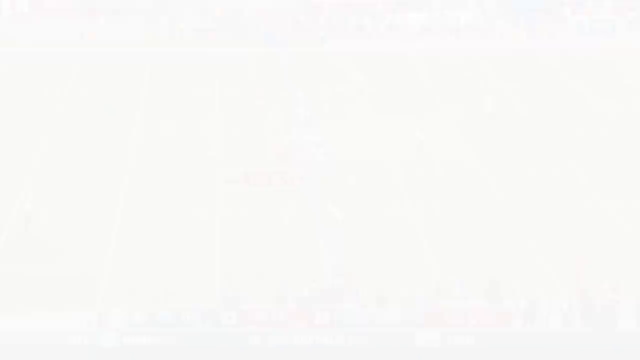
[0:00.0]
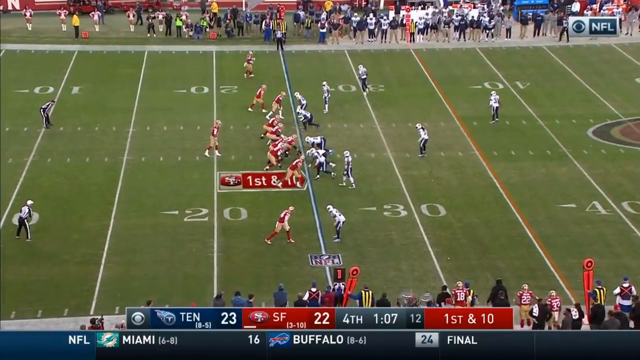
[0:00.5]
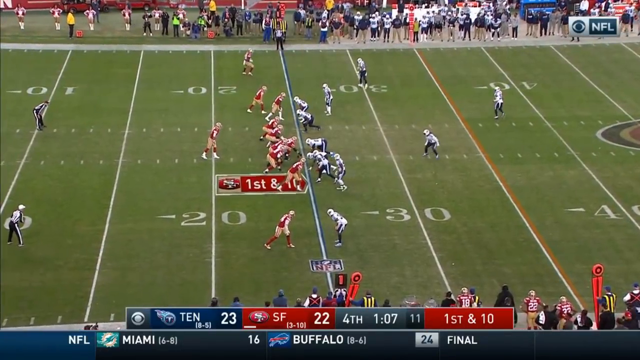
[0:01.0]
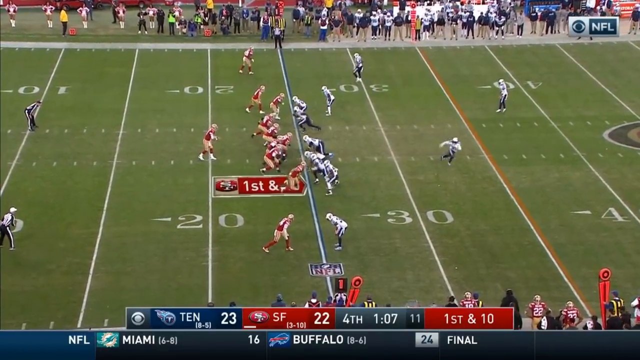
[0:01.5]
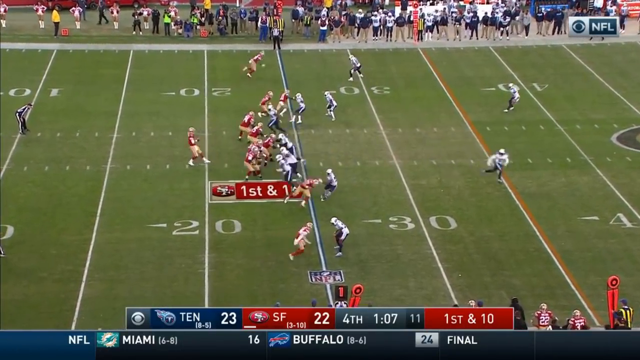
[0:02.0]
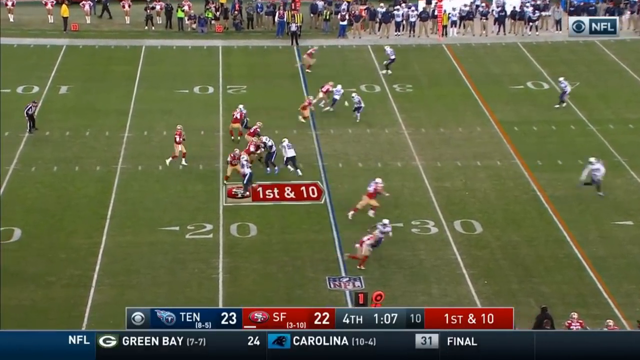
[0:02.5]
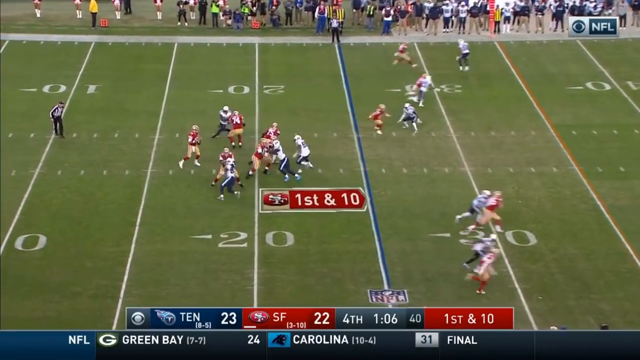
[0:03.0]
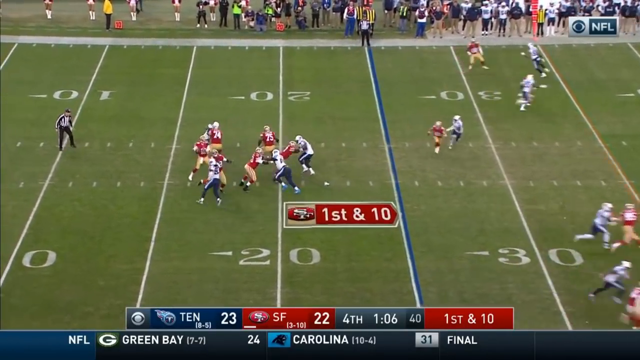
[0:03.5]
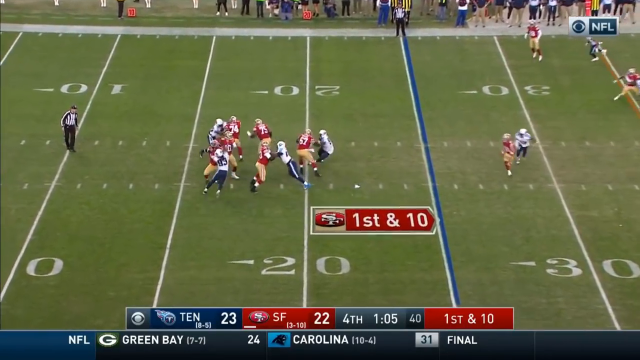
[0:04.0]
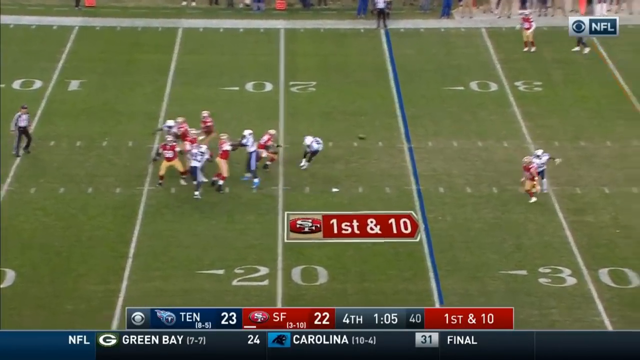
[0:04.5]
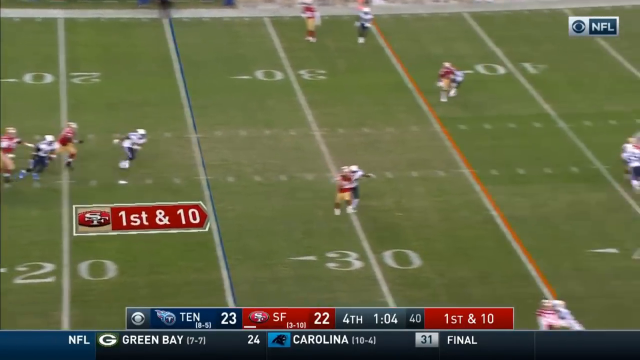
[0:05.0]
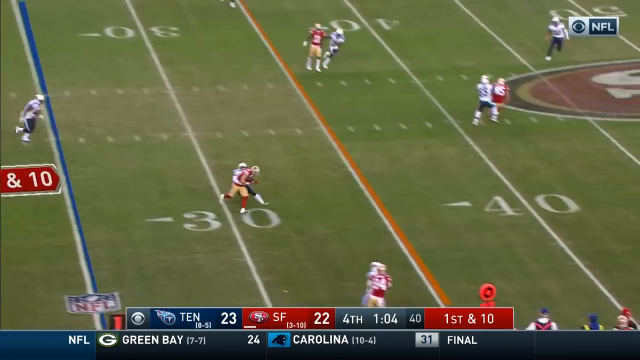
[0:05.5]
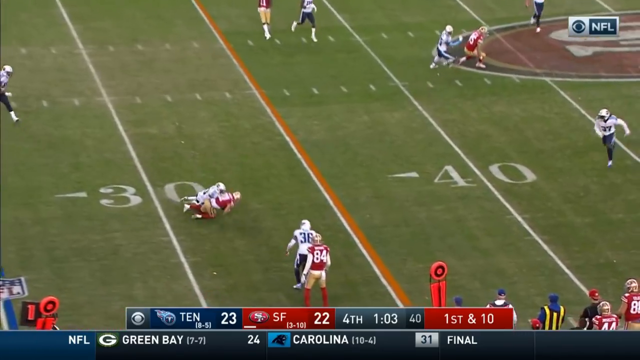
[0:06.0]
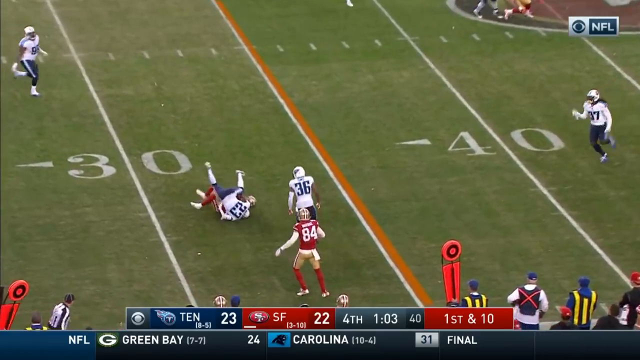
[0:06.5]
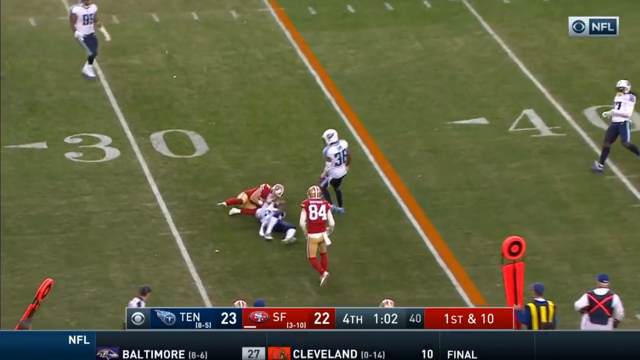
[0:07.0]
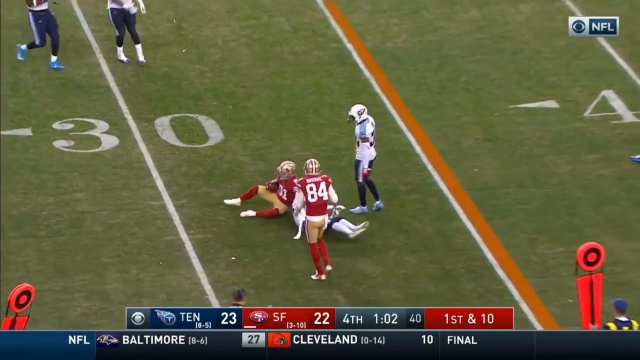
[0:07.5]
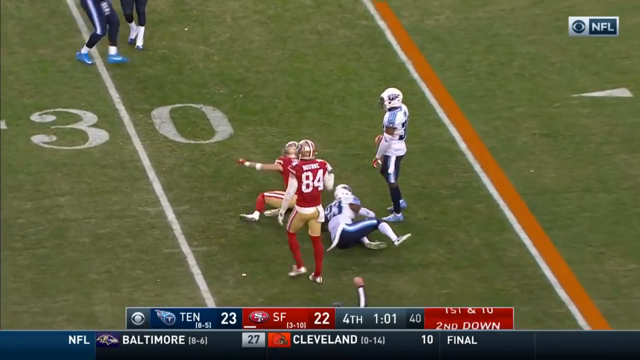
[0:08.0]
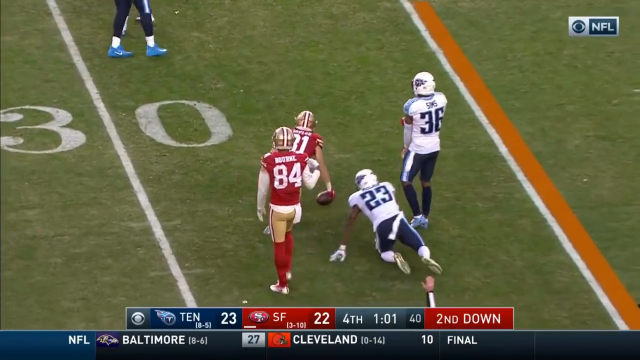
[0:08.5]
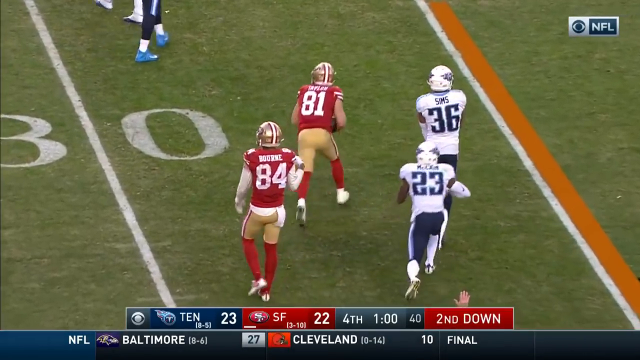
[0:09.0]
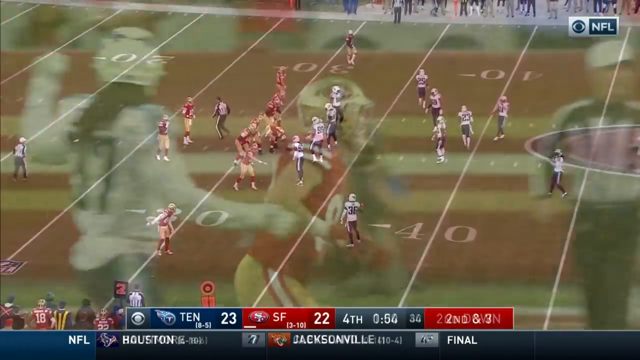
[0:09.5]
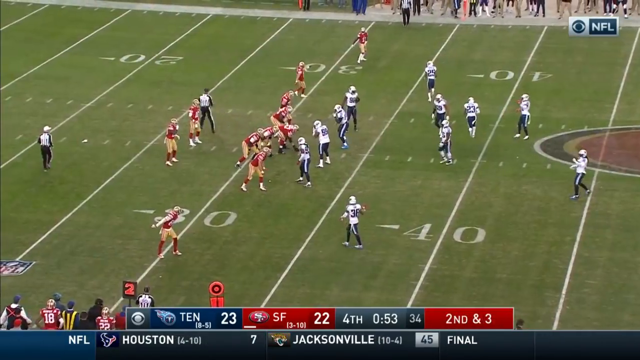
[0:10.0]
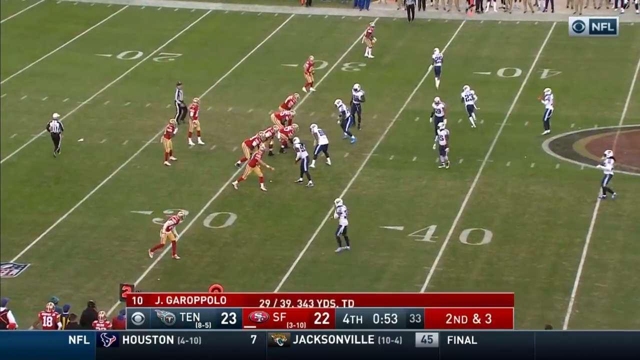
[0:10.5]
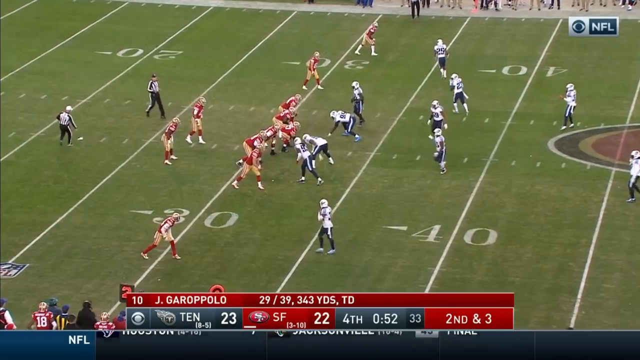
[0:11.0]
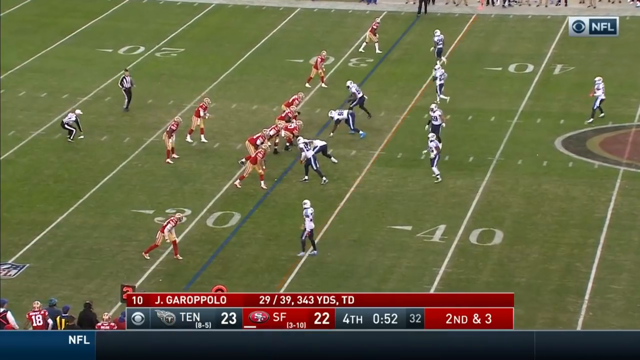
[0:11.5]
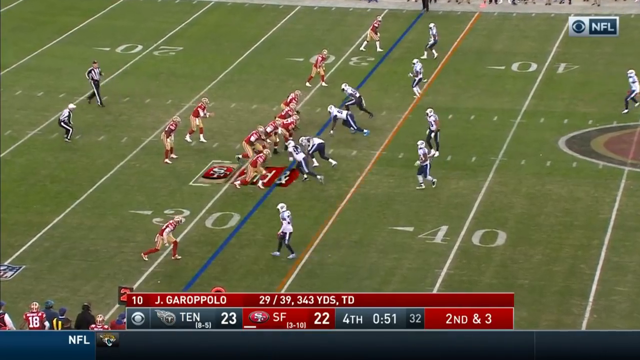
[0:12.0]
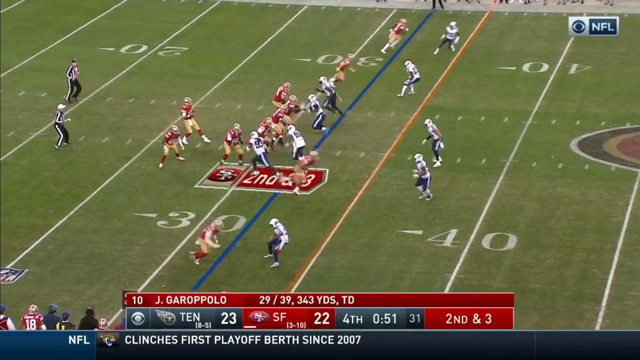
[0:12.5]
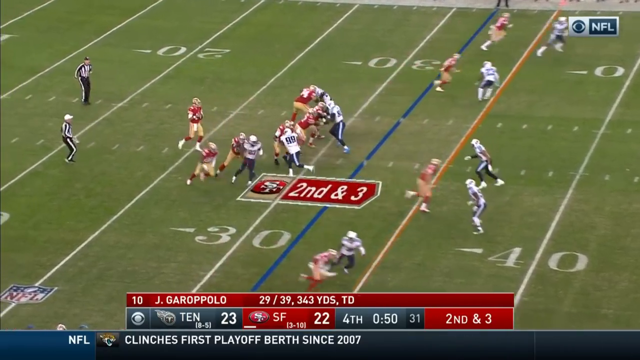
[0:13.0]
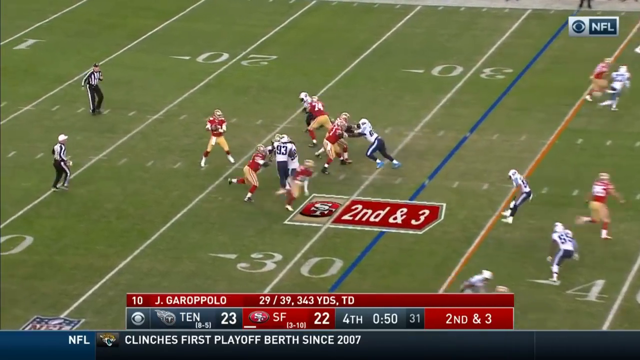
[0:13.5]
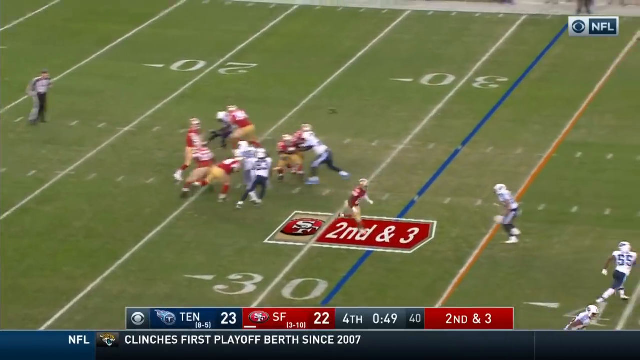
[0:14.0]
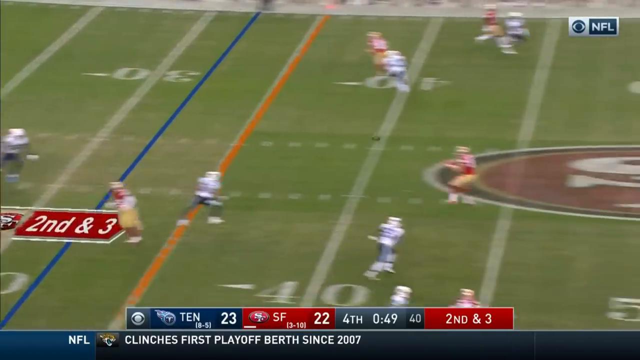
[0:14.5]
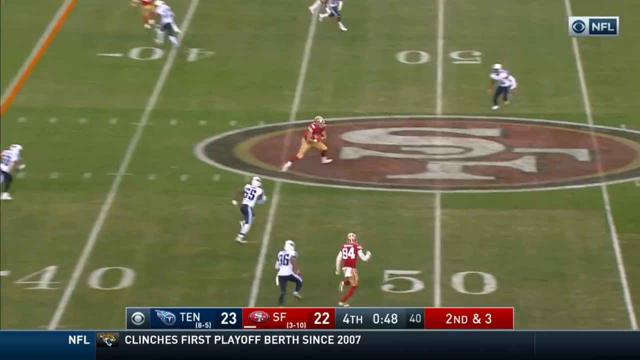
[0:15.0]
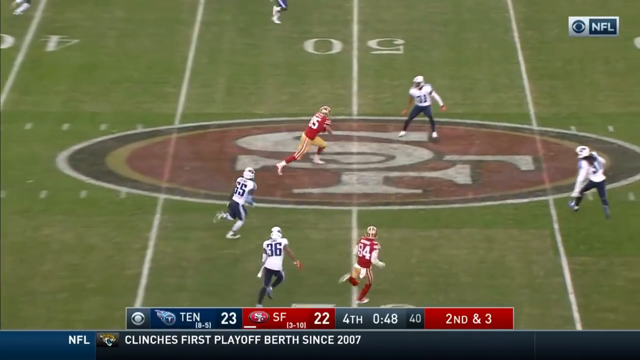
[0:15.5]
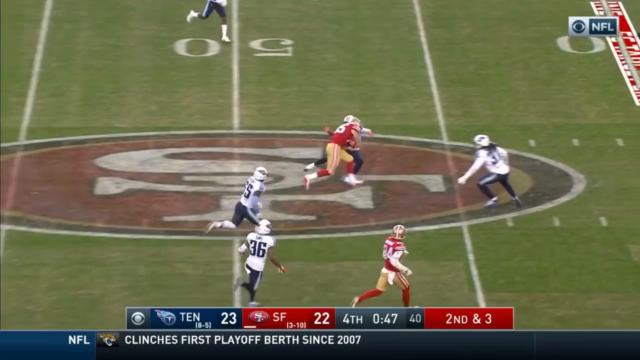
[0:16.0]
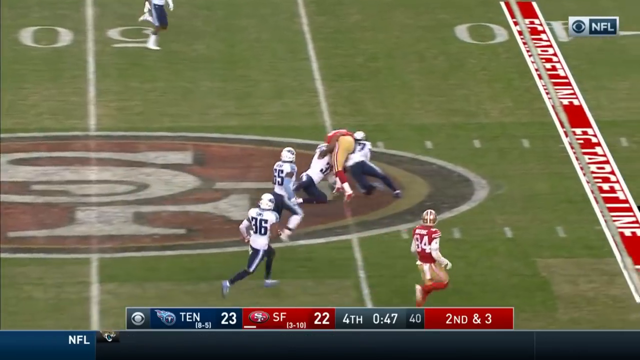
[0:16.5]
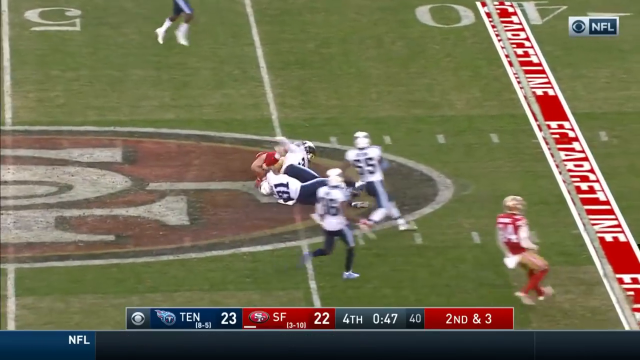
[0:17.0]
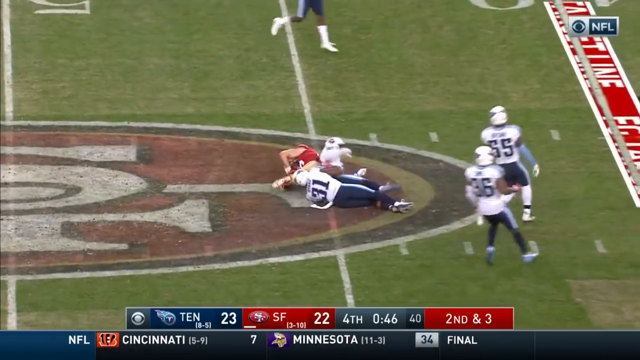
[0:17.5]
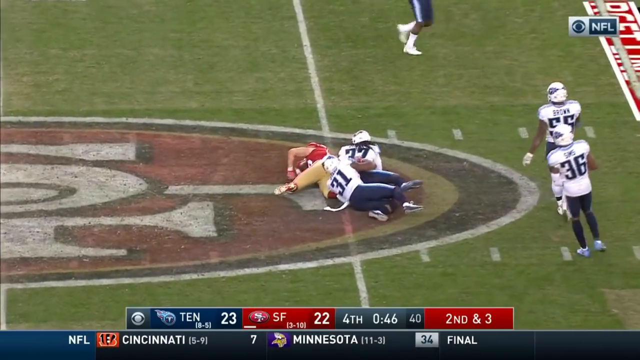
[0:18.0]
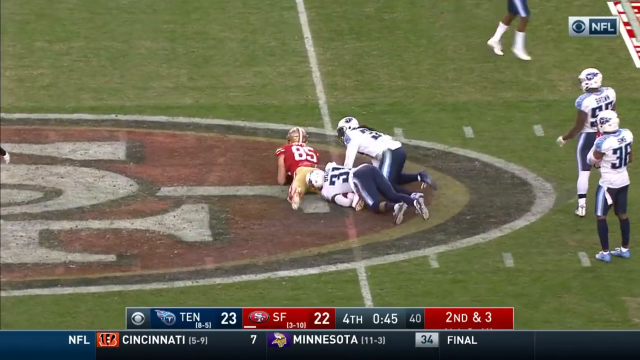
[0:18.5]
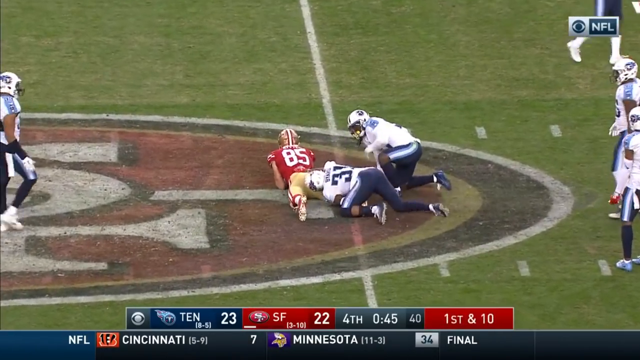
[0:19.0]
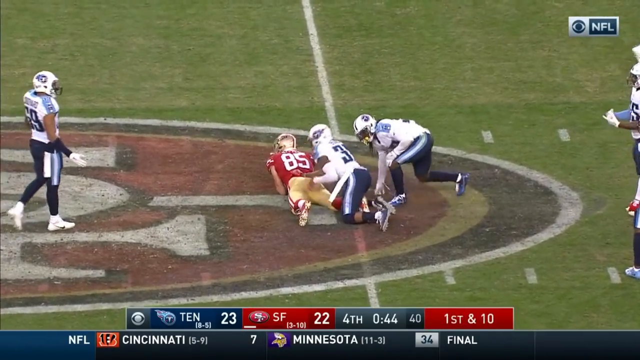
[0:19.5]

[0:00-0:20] A side medium shot shows a football match between a team in red, on the left of the frame, and a team in white. The ball is in the centre, and it looks like the match is about to begin. Players are poised on either side, some ready to block and some ready to run. The ball moves backwards to the left from the red team, and a player takes two steps backwards, right arm slightly in front, looking to throw. They throw the ball forward and to their right to a player who catches it, turns, and is tackled by a player in white. Both fall to the ground with the player in white on top, and they roll, but the red player, who wears number 81, still holds the ball. The video cuts to another moment in the match, with the team in white more advanced, going from right to left against the red team. The red team have the ball in a line-out. The ball goes back to the quarterback, who takes two steps back and, with the right hand slightly bent back, propels the ball forward very straight to a player in exactly the centre. That player catches the ball, spins 360 degrees and starts to run straight ahead to the right, but is blocked off by two players in white. They go over, and the player continues to hold on to the ball.